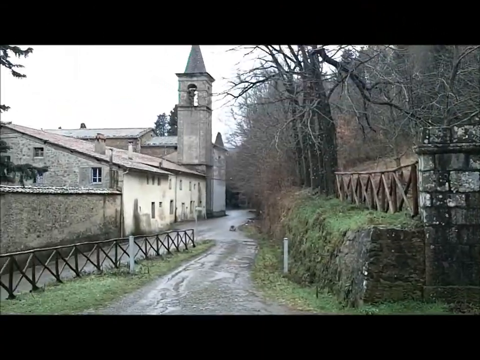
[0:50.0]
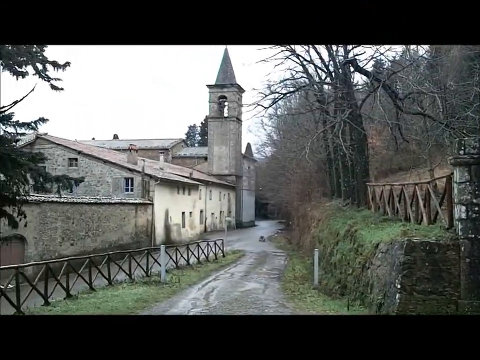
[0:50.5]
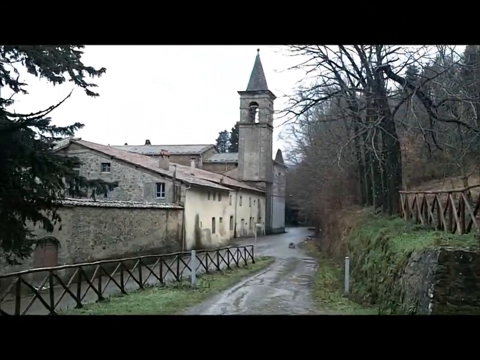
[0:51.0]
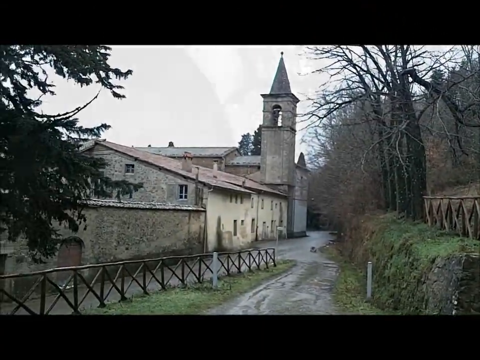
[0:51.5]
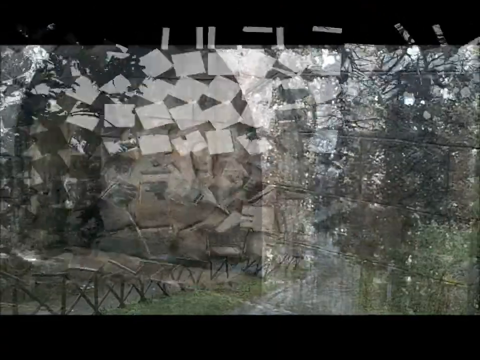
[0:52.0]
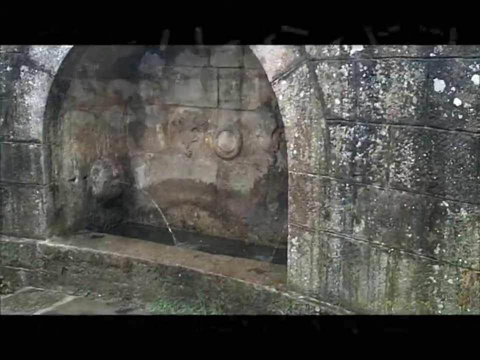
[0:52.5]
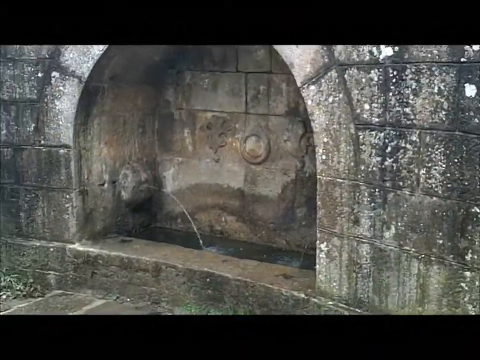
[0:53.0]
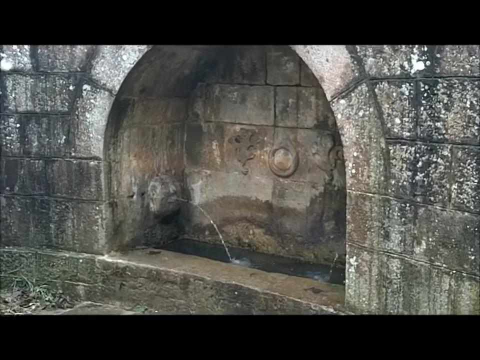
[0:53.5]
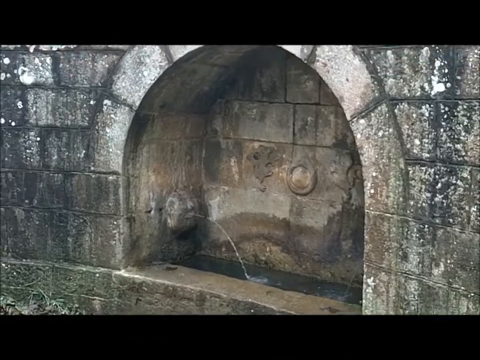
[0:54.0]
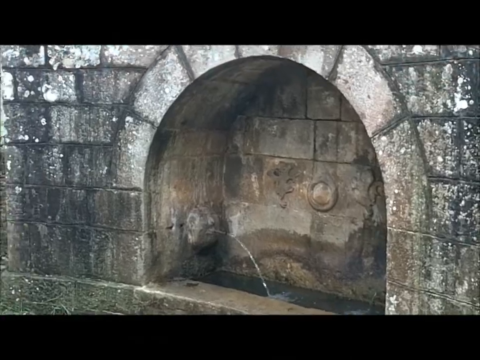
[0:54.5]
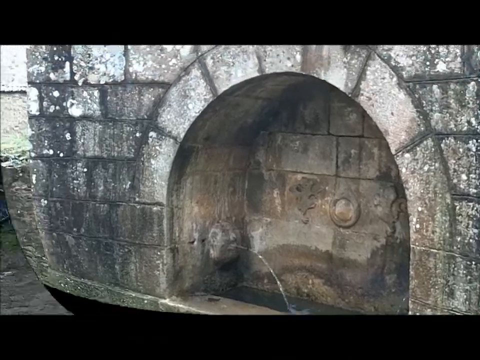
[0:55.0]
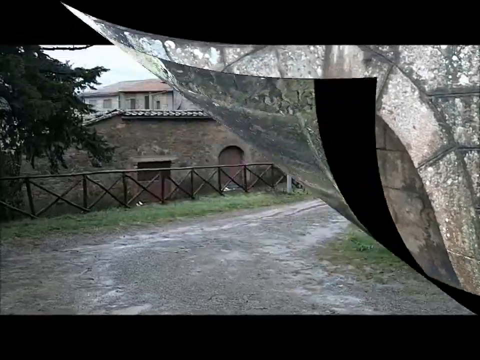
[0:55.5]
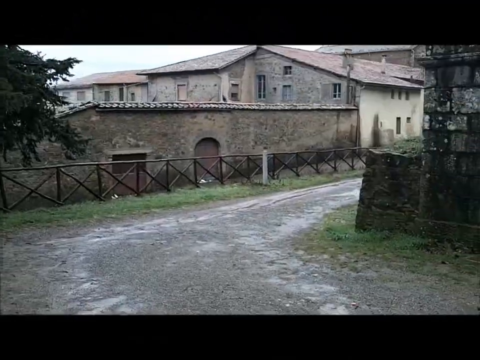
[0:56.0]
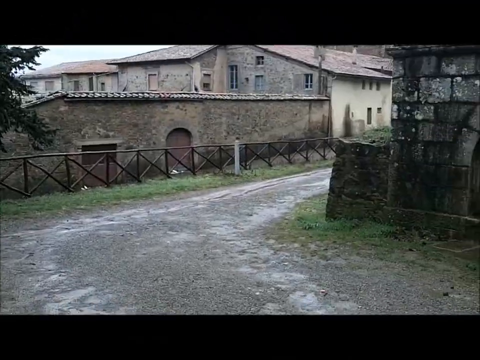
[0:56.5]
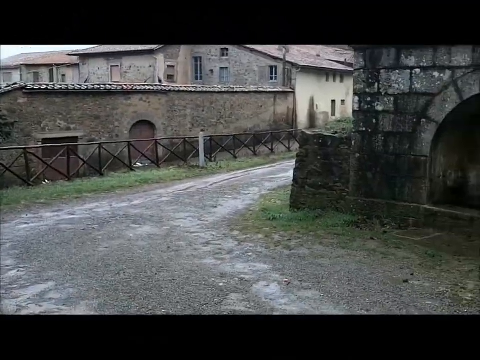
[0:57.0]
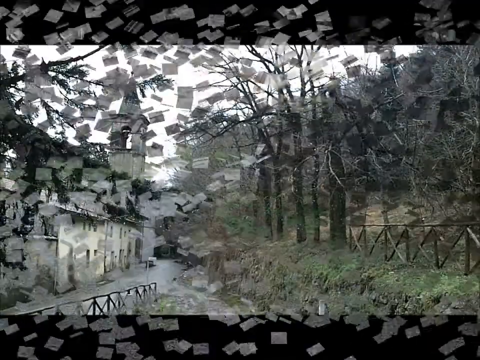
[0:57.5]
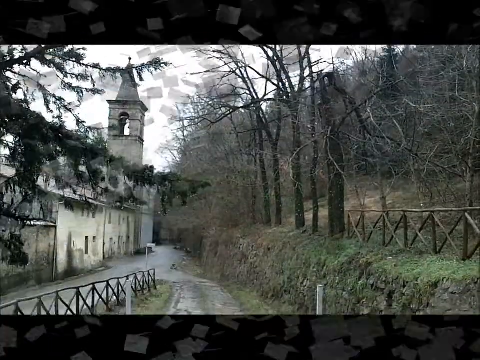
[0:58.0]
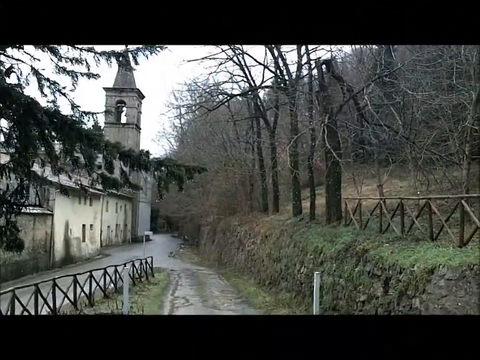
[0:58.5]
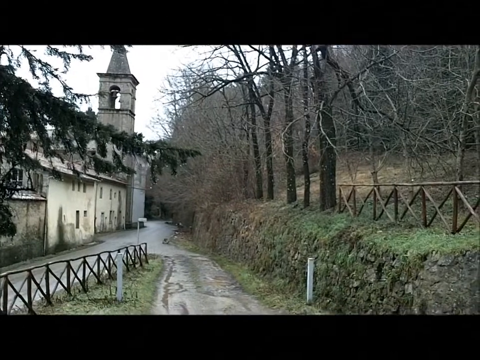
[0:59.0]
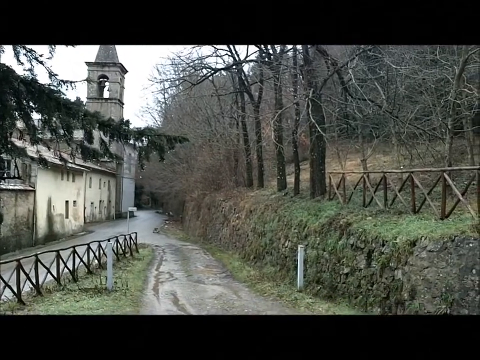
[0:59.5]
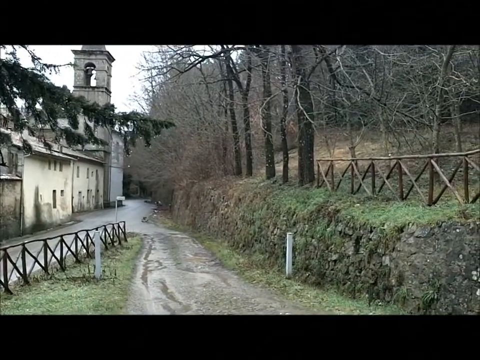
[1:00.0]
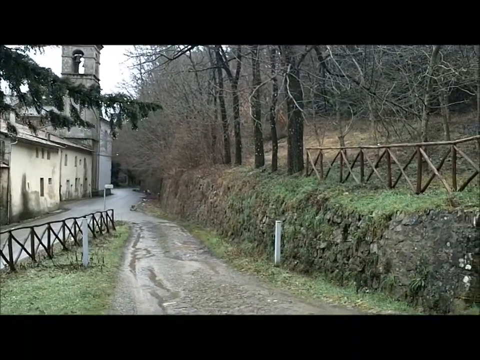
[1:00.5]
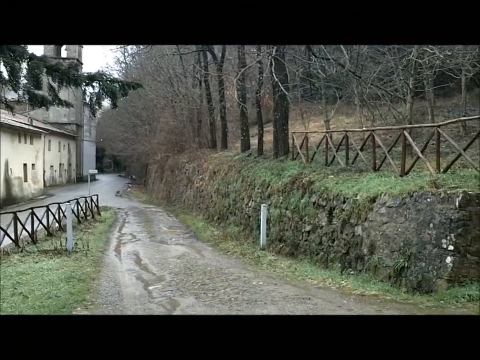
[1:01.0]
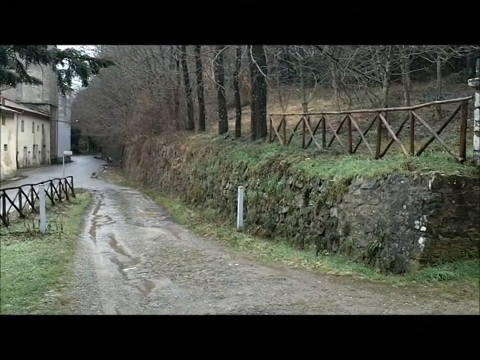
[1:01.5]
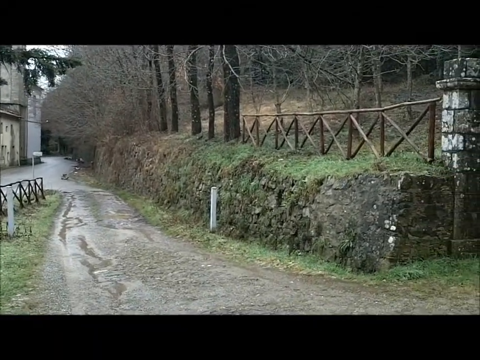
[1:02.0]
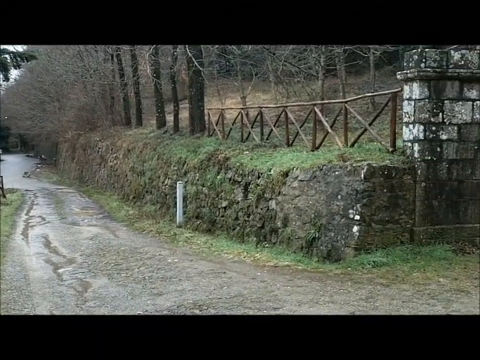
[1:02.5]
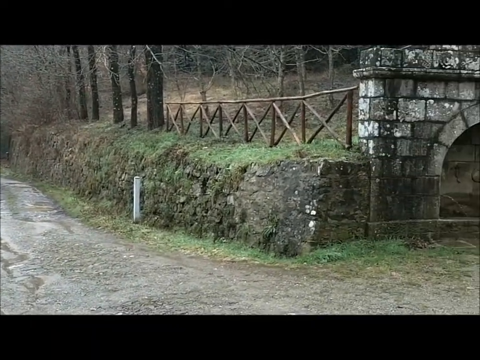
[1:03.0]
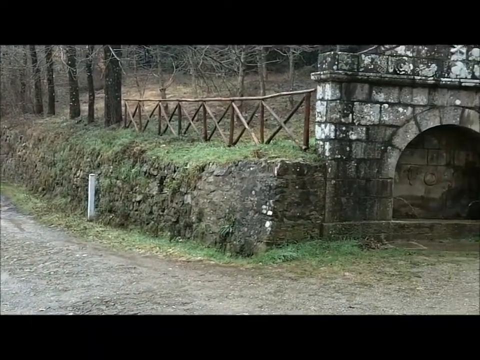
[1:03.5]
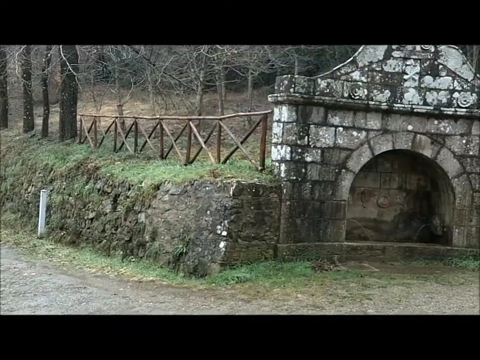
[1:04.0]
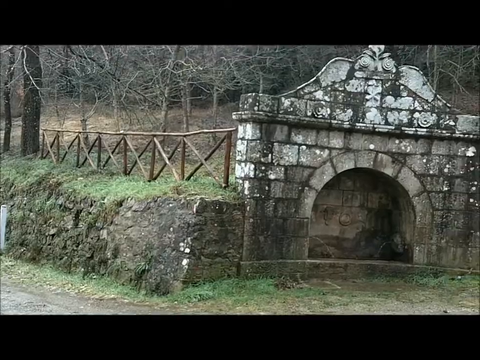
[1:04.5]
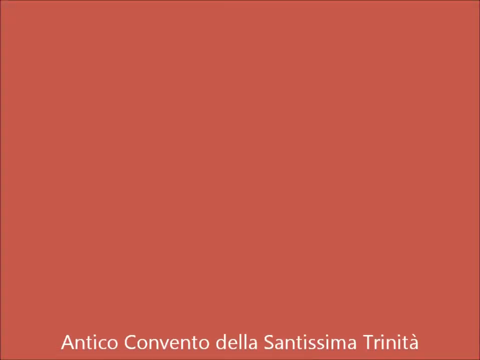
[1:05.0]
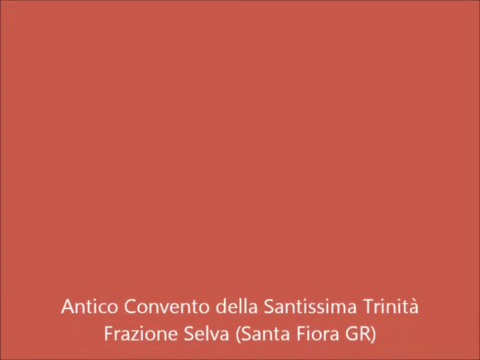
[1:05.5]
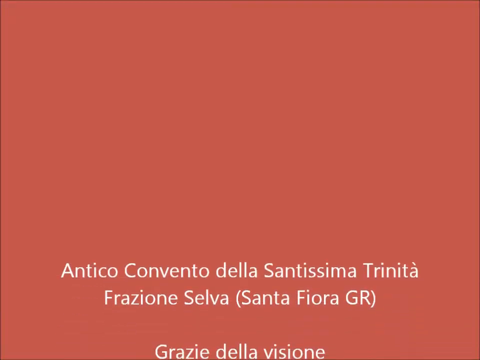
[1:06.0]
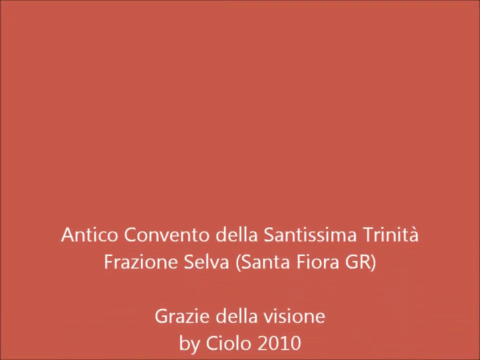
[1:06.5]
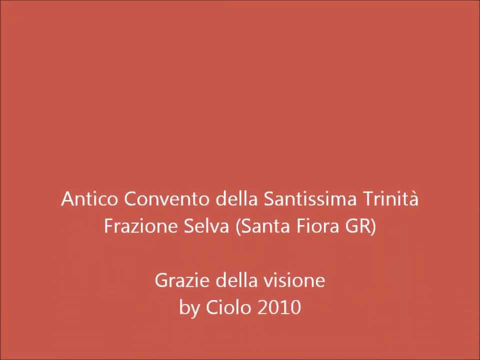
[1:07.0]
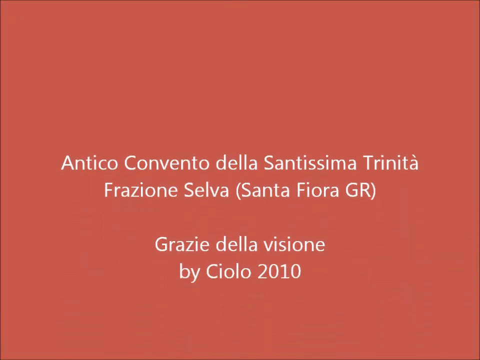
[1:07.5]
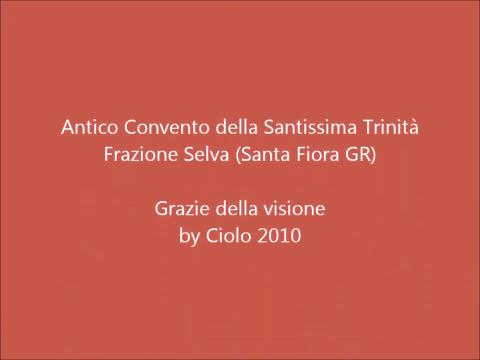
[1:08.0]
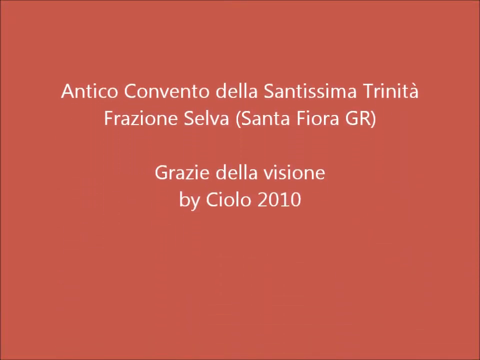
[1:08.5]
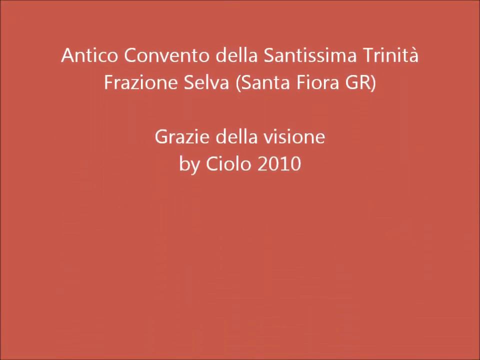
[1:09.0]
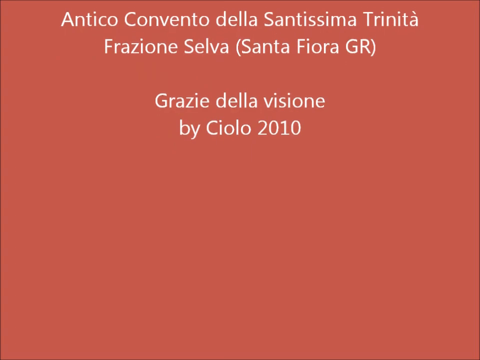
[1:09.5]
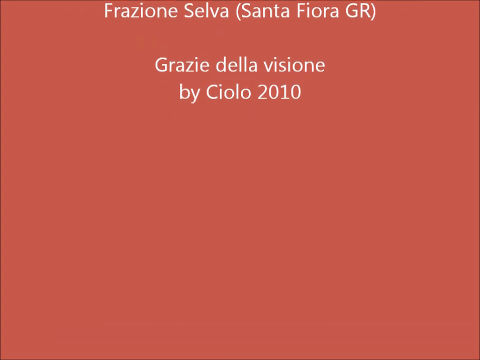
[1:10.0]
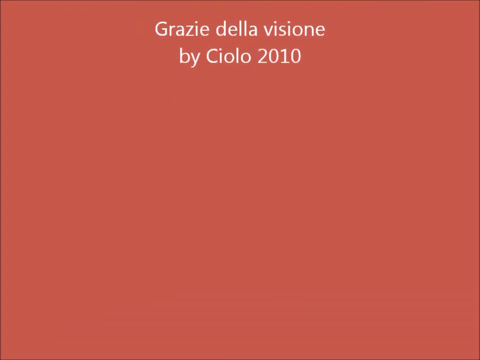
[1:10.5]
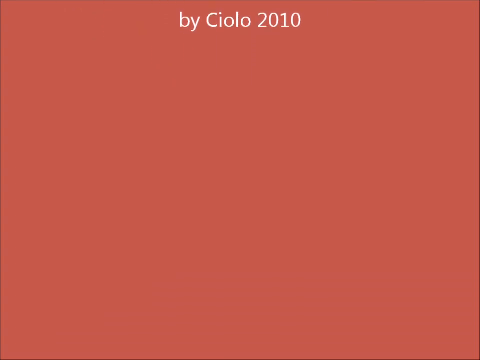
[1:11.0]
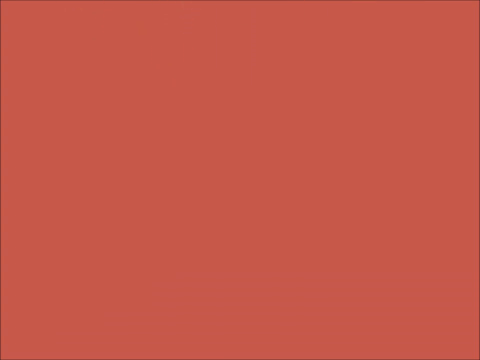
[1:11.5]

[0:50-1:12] The exterior of the monastery is shown, including the bell tower and an extended portion. The monastery appears to have a somewhat Romanesque design. On the grounds are the bell tower, the extended portion, and a fountain area with an arch made of arched stones, with a stream coming out of the stones. Then a dirt road is shown, and another one that leads directly to the site of the monastery where the bell tower is located. To the right of that, the ground is somewhat elevated and lined with trees, and it looks like some kind of hiking trail or equestrian trail.